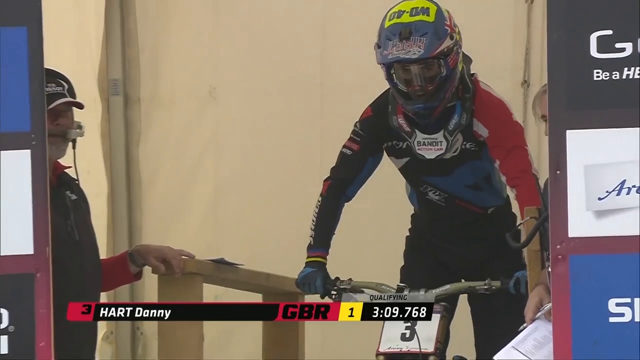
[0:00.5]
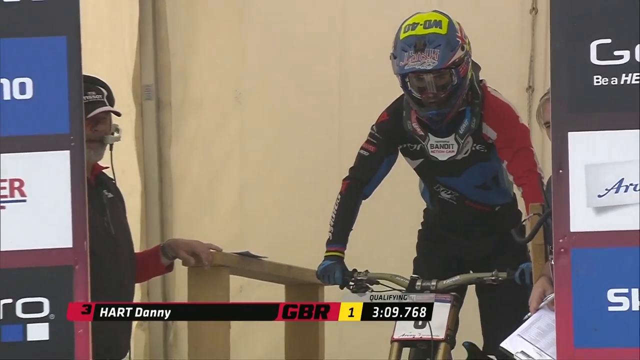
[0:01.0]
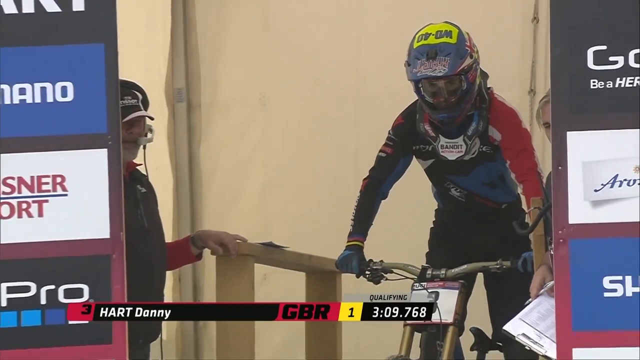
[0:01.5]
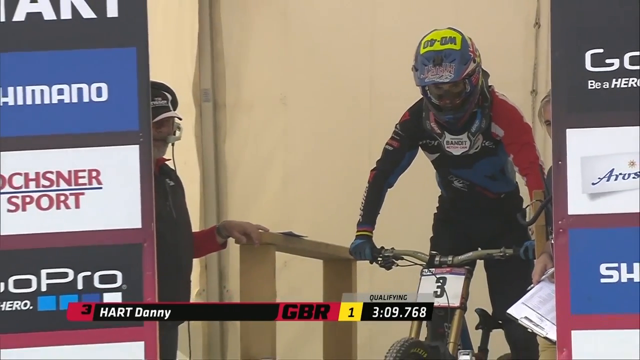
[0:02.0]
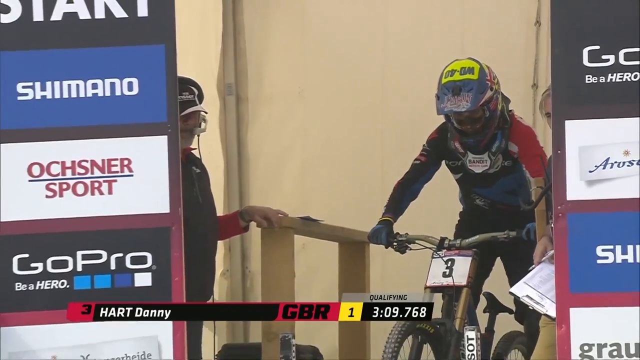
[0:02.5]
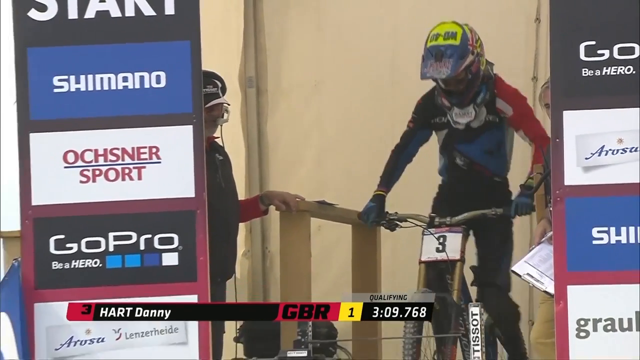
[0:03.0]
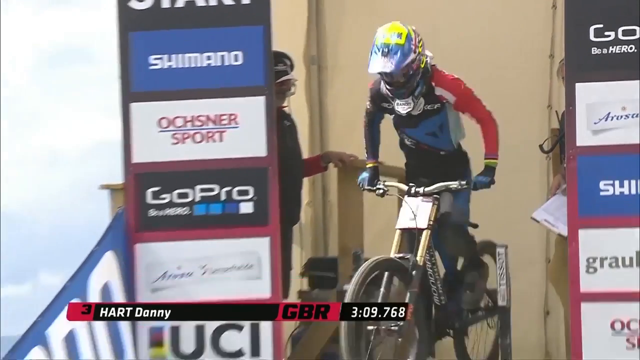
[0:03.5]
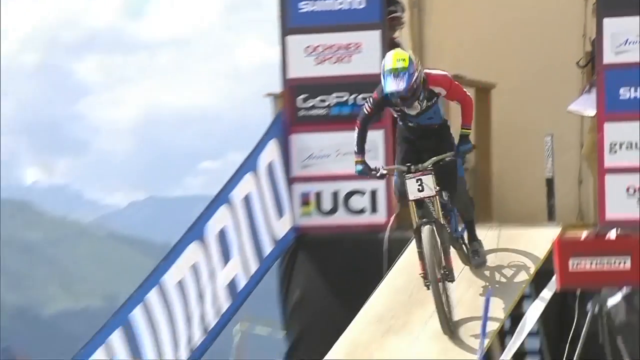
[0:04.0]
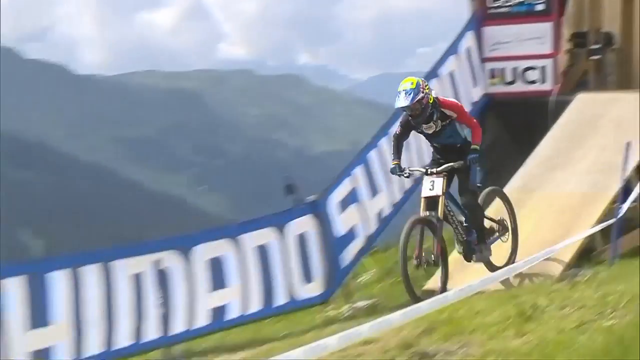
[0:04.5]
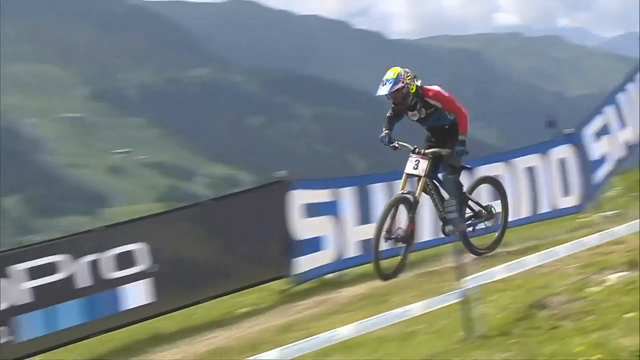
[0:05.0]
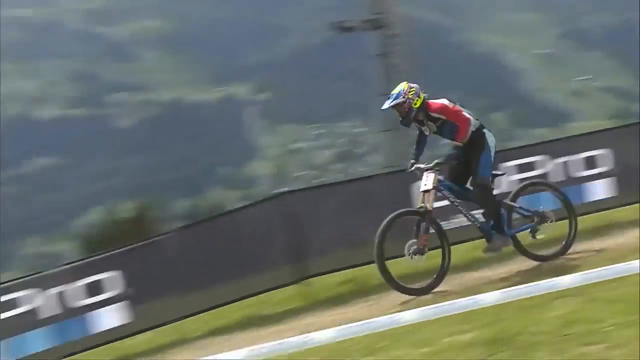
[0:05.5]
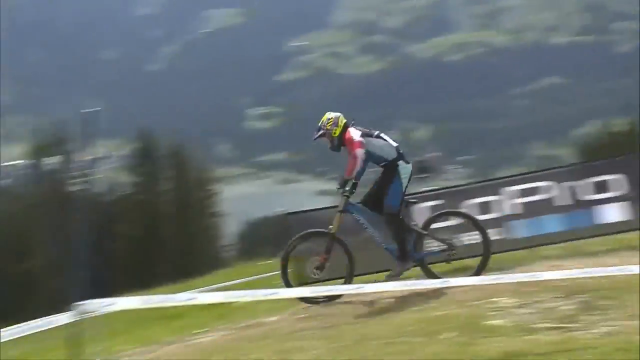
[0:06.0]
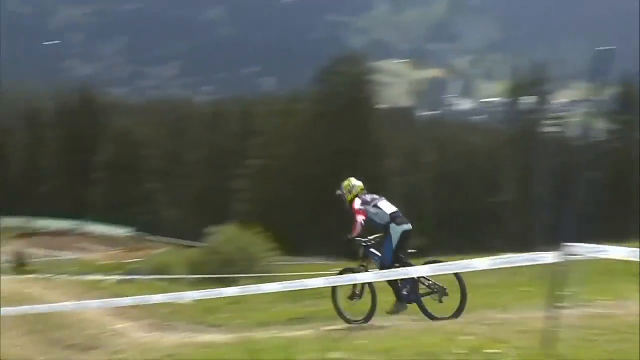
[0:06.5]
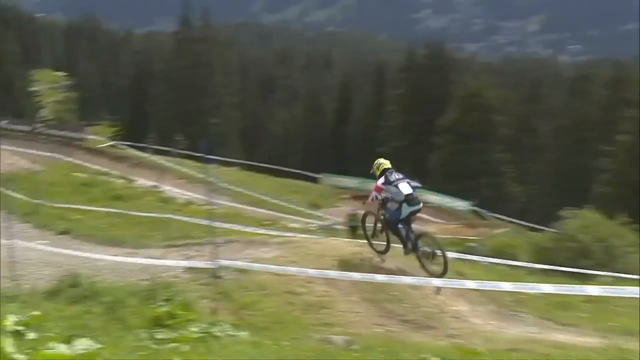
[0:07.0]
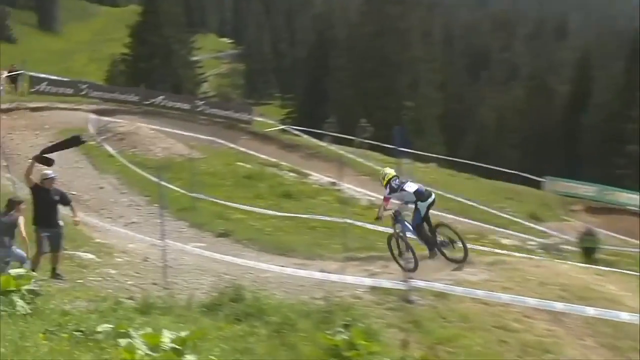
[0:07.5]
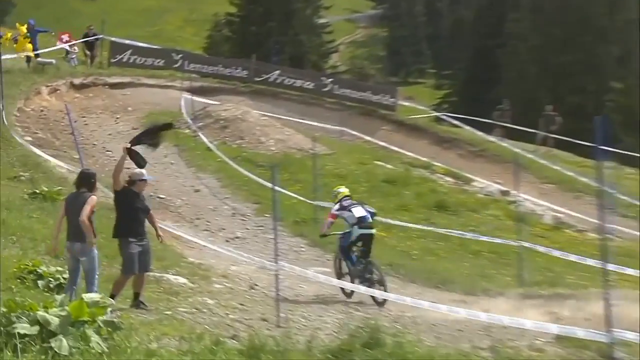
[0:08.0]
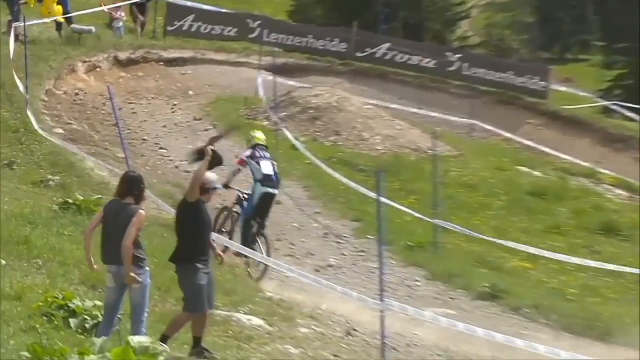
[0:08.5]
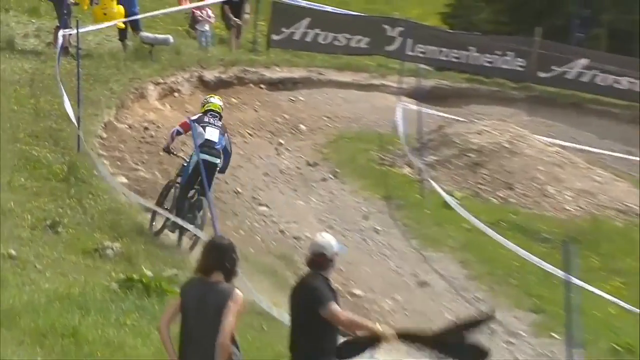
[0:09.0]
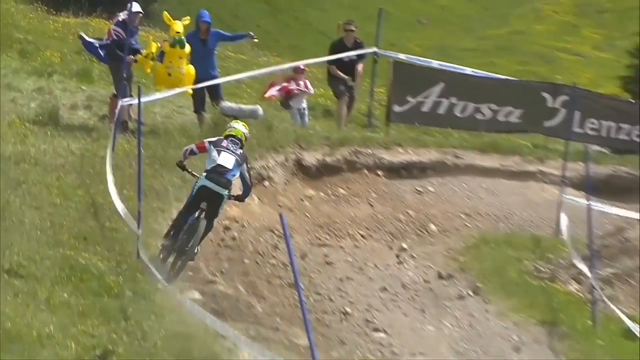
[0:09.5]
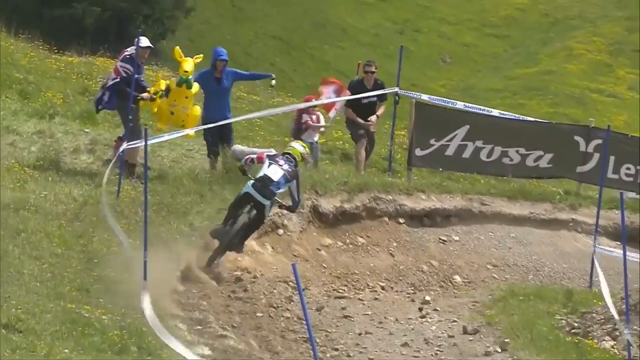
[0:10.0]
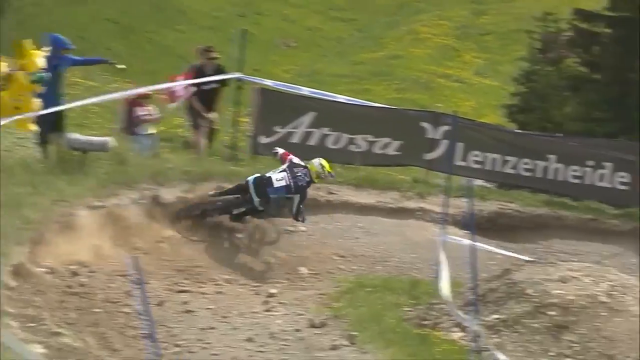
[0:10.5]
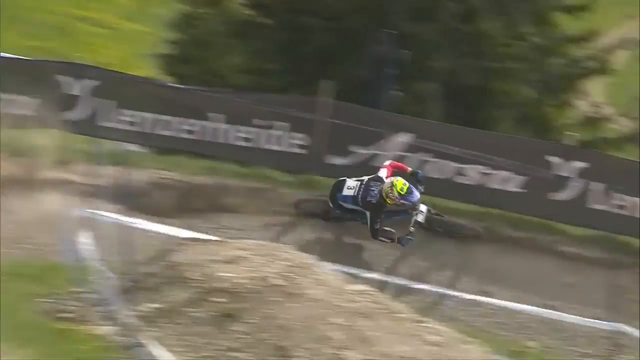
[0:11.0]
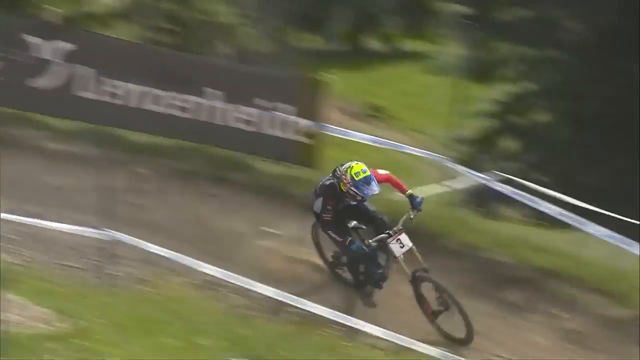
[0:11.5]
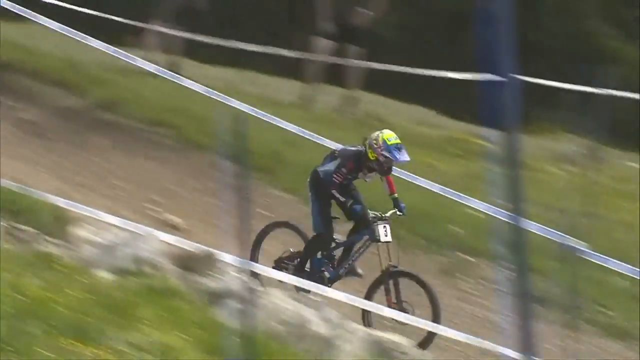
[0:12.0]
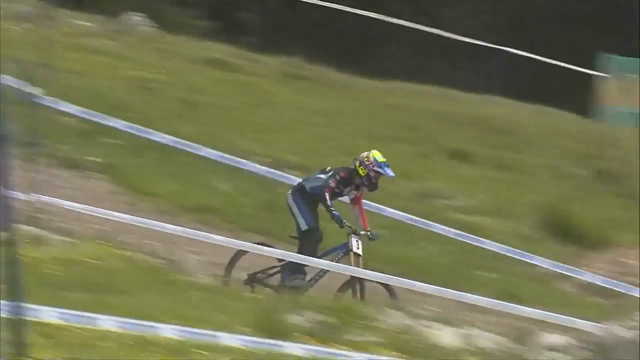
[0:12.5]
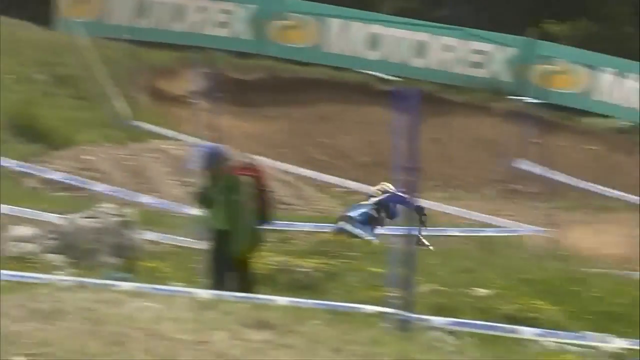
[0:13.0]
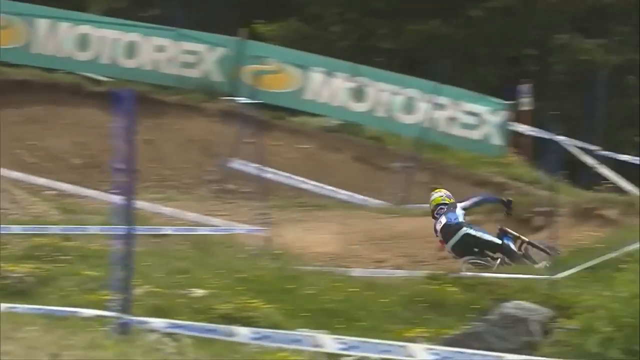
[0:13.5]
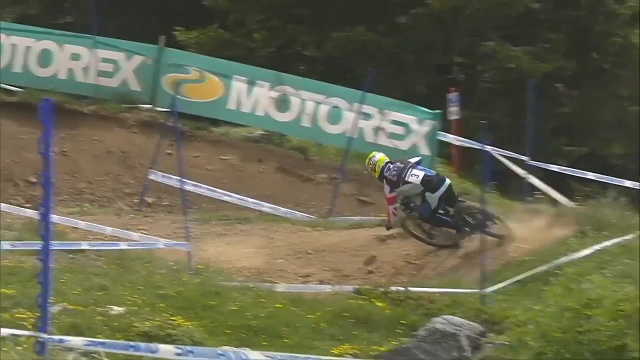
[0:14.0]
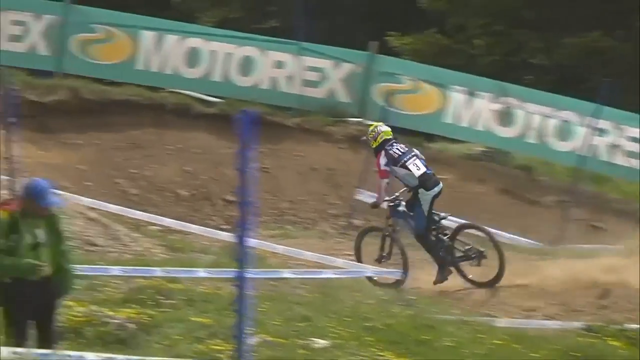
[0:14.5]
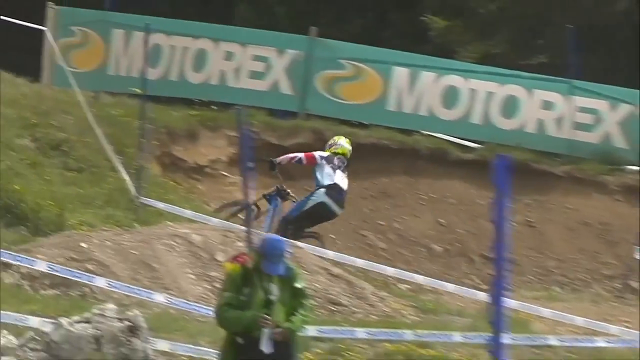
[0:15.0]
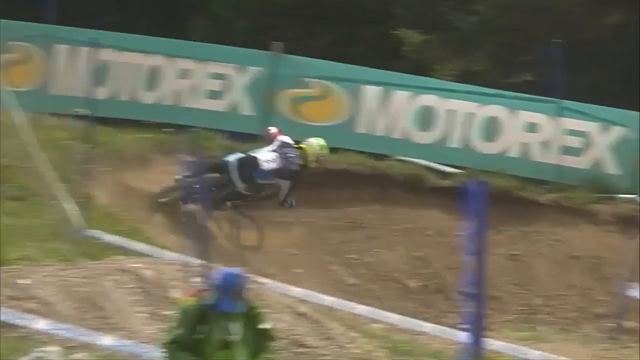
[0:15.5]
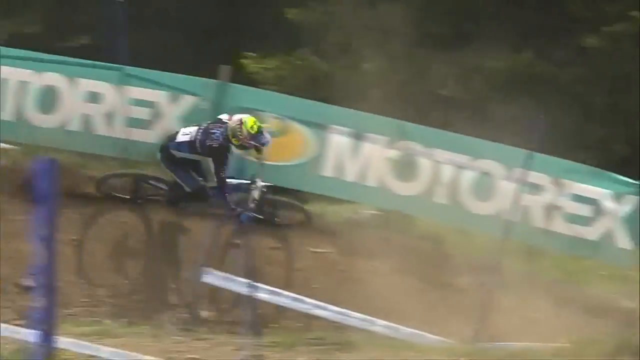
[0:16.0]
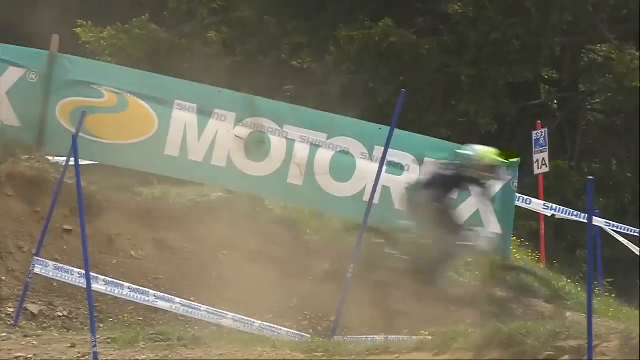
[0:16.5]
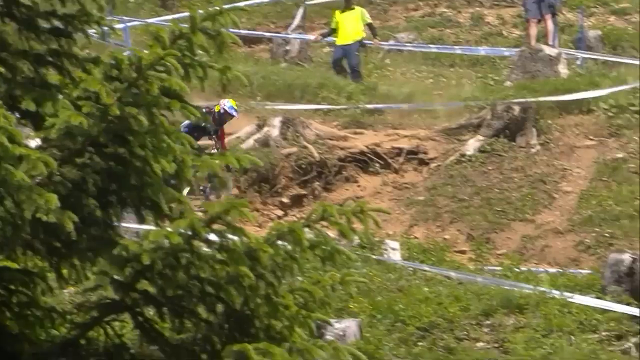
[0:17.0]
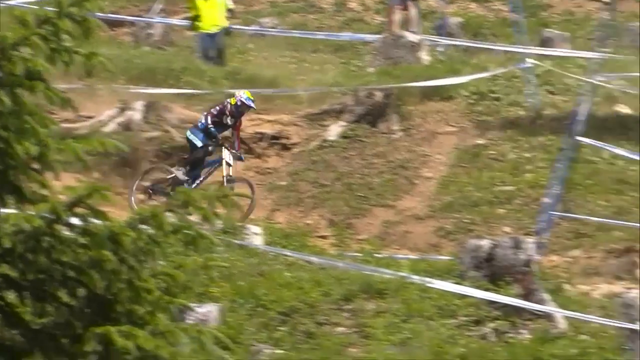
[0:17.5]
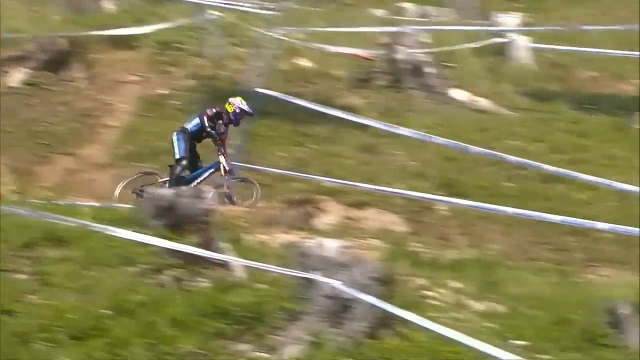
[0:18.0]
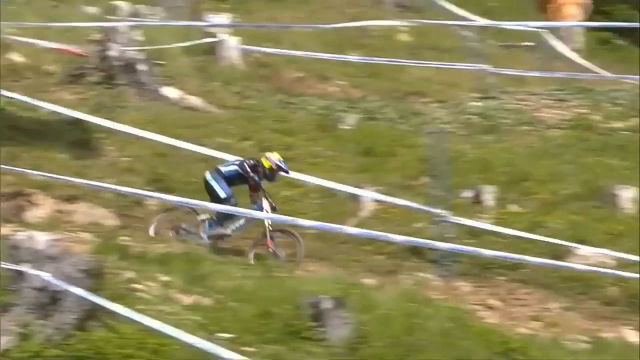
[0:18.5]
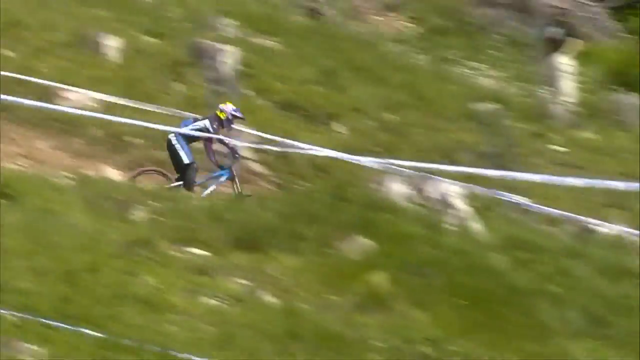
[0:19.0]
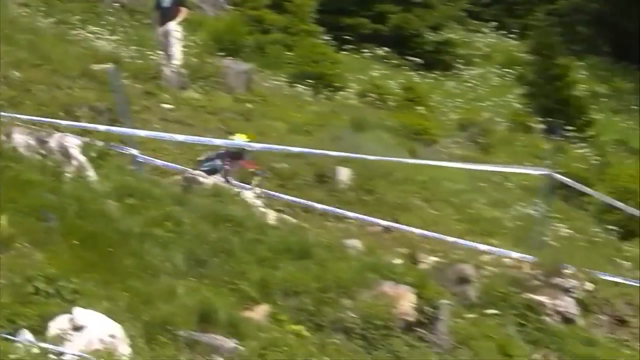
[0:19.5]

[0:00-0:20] A biker is at the gate, and his name, Hart Donnie, is shown on the screen. He is flanked by two boards covered with a bunch of advertisements, and he appears to be on top of a very large mountain, with snow-capped mountains visible in the distance. He pushes off and starts going down a dirt trail with some rocks. Tape on the sides of the trail marks his route, and people stand behind the tape; maybe five people are visible along the trail. He picks up speed as he careens around the winding path.